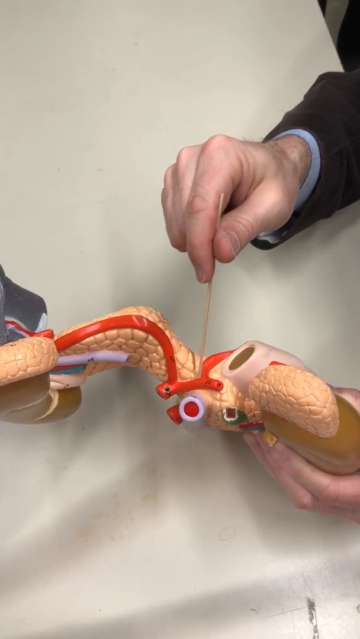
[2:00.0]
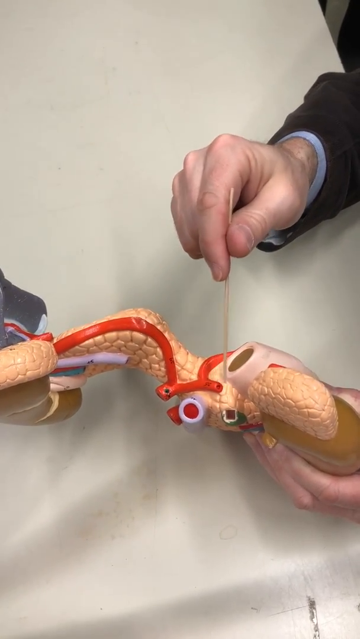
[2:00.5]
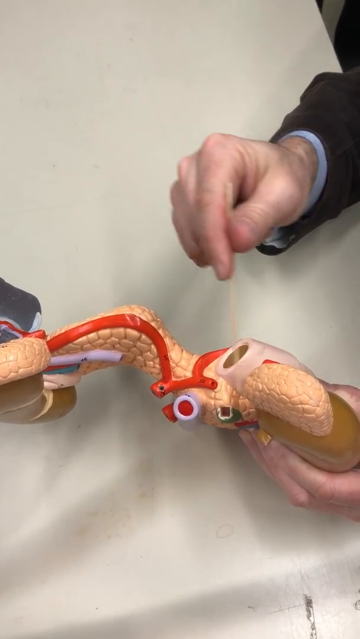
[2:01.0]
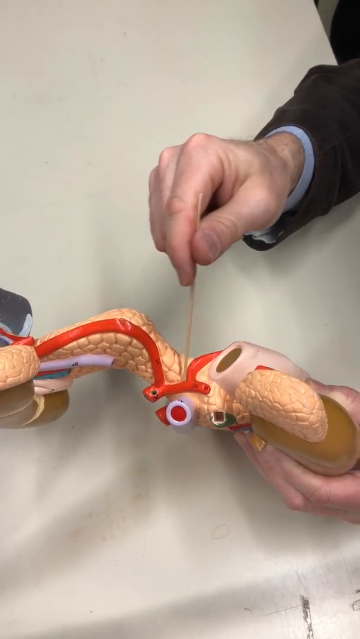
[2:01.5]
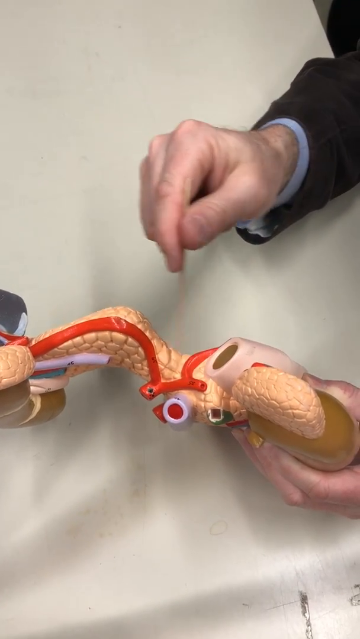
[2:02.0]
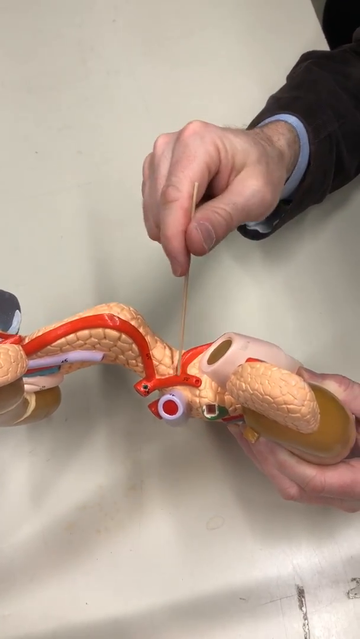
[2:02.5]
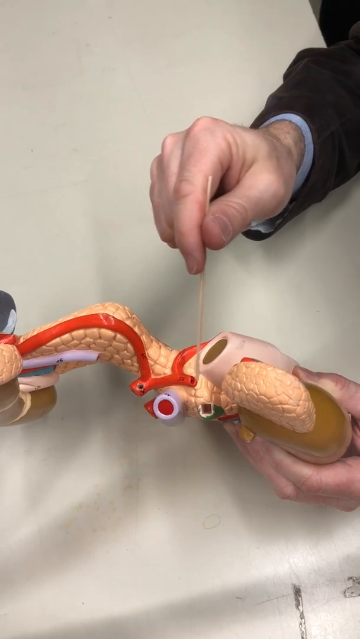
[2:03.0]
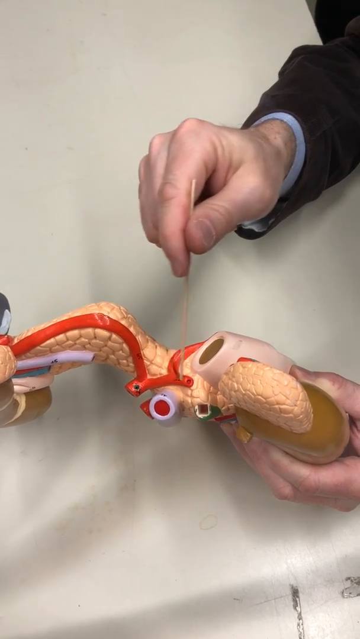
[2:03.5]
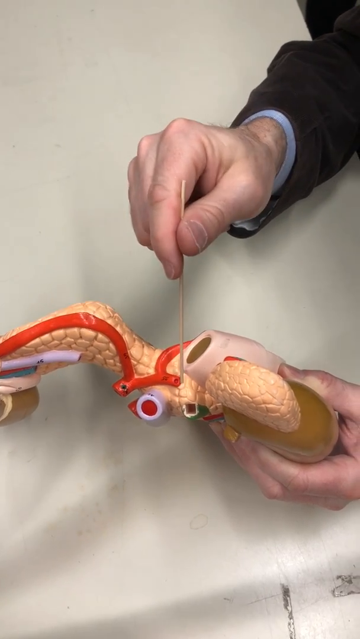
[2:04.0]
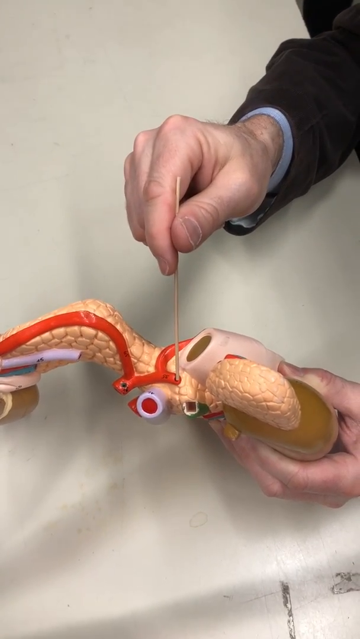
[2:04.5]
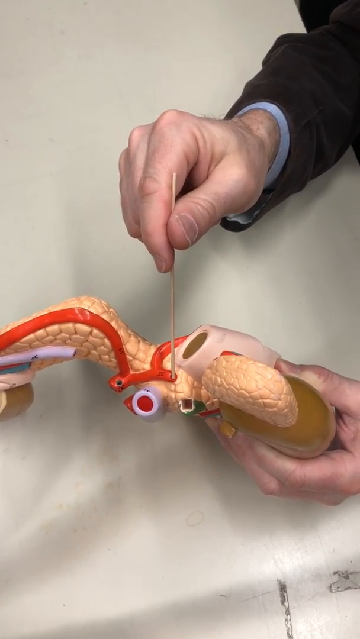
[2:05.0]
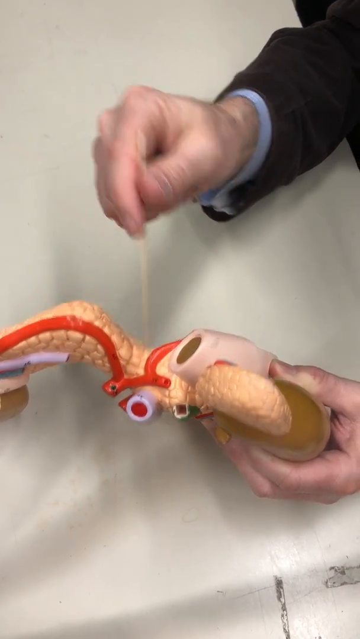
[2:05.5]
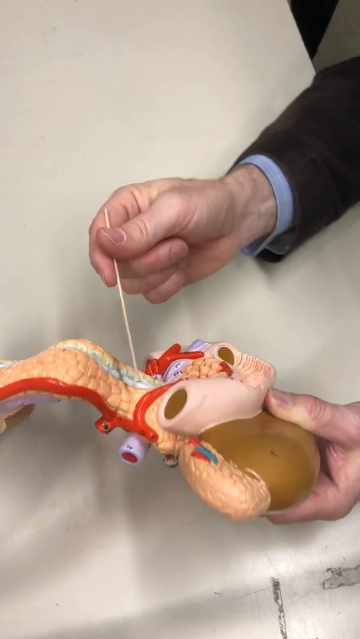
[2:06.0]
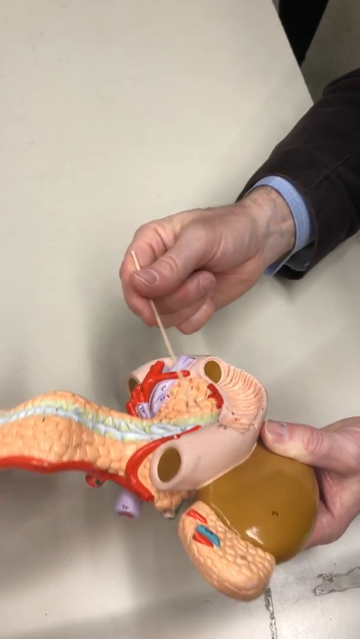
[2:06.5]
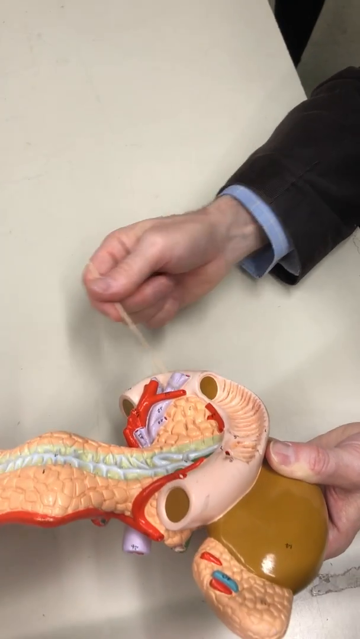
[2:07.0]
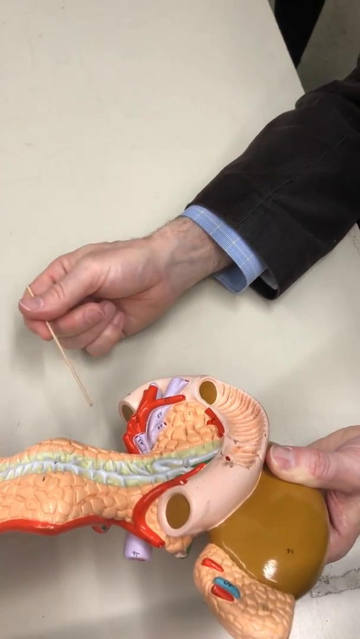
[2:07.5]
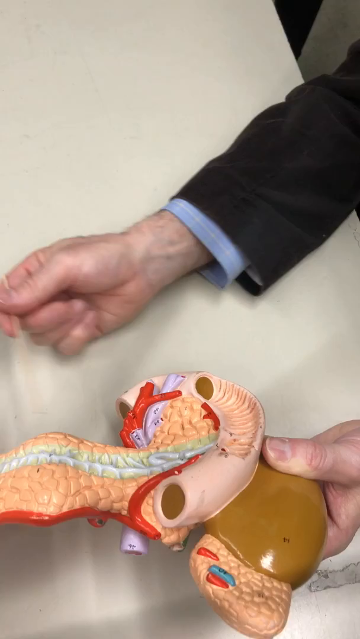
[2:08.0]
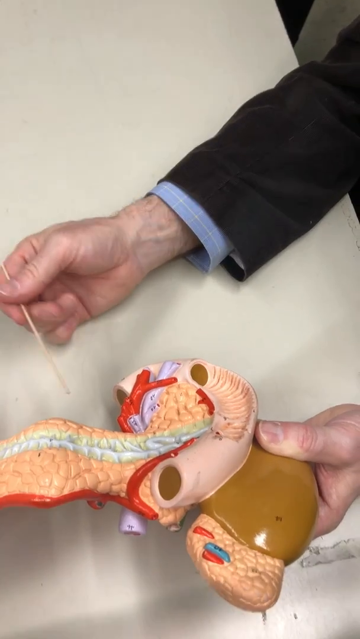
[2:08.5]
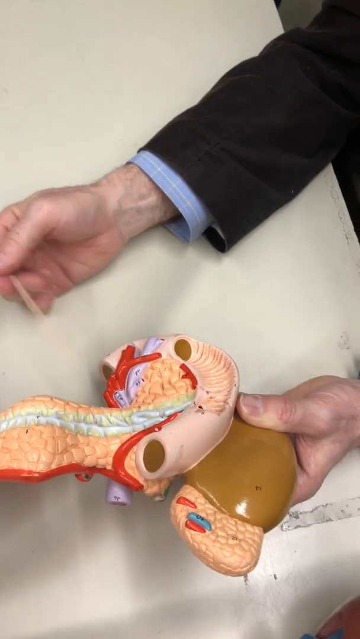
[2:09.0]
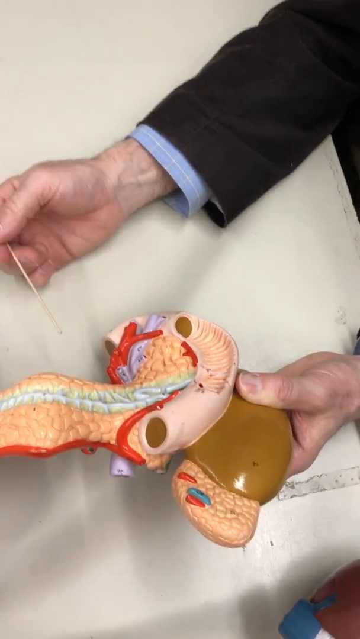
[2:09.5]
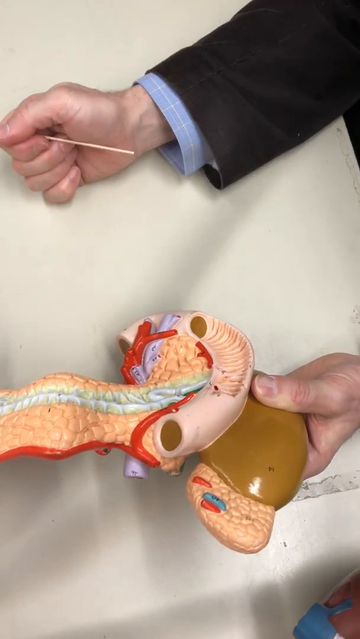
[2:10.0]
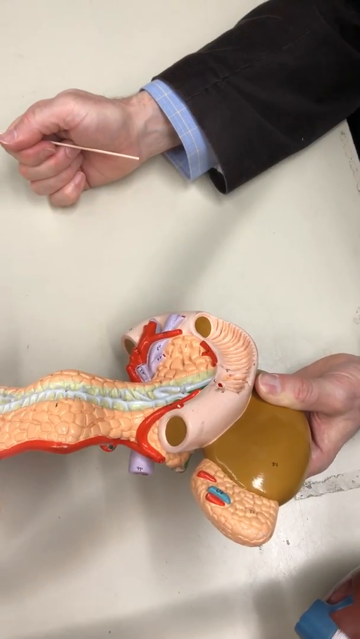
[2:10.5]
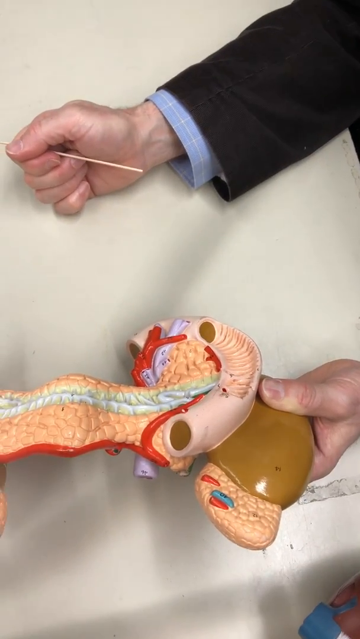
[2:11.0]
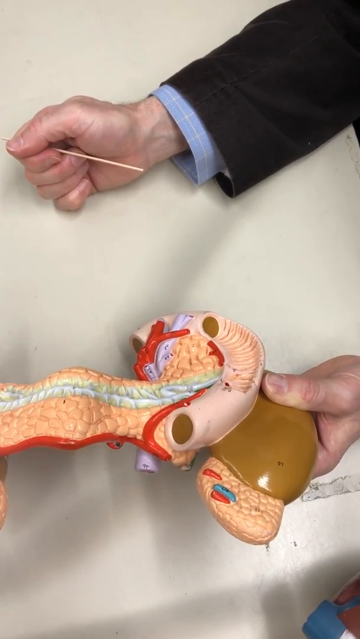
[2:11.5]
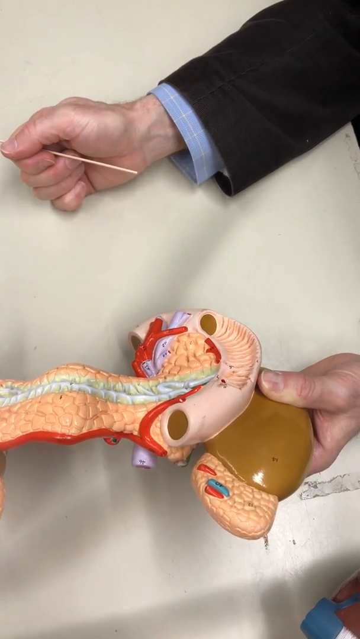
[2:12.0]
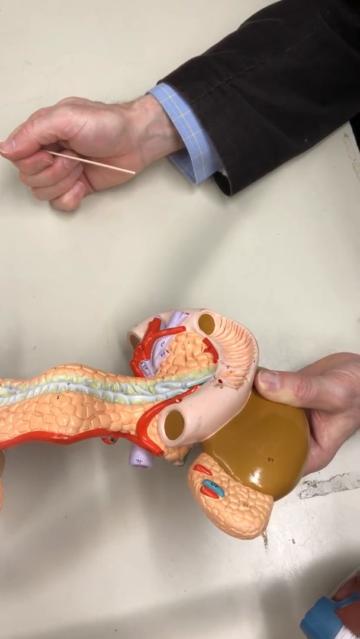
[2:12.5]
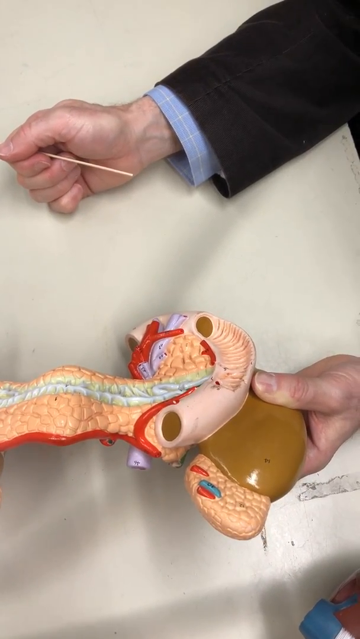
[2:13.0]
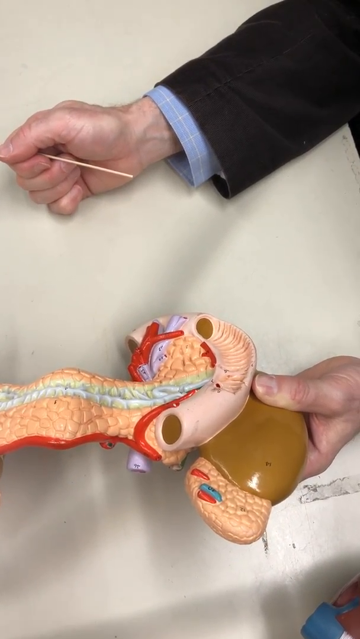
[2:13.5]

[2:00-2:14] Both hands are working: one holds the model while the other keeps pointing at the valve and at the opening of the valve on top. He points across the whole organism, indicating all its parts, and then stops. Only the hand is visible. The object looks like a heart.